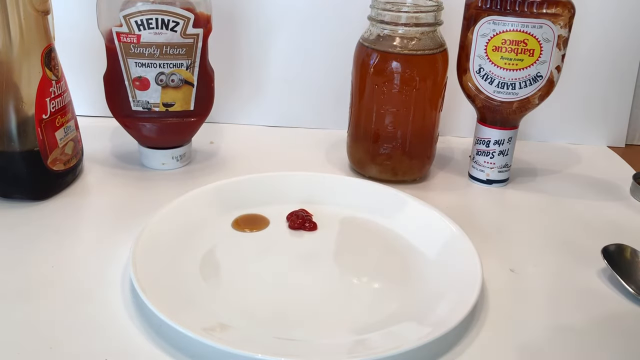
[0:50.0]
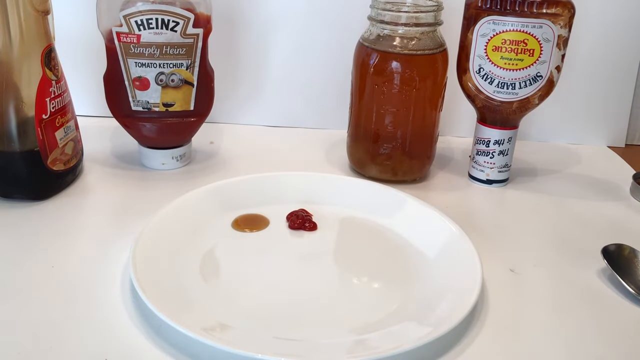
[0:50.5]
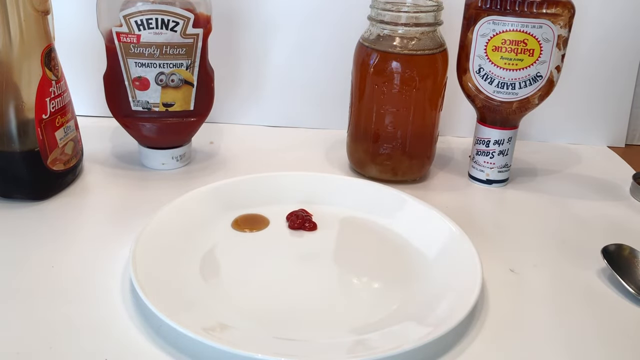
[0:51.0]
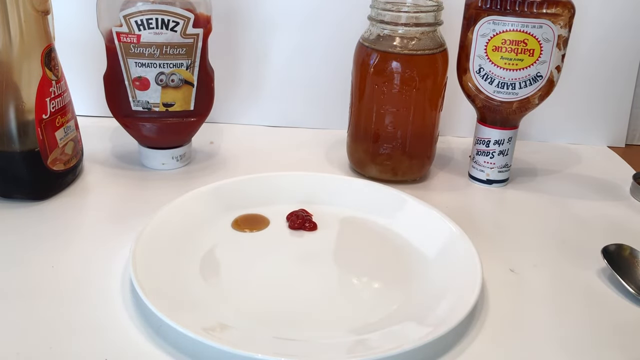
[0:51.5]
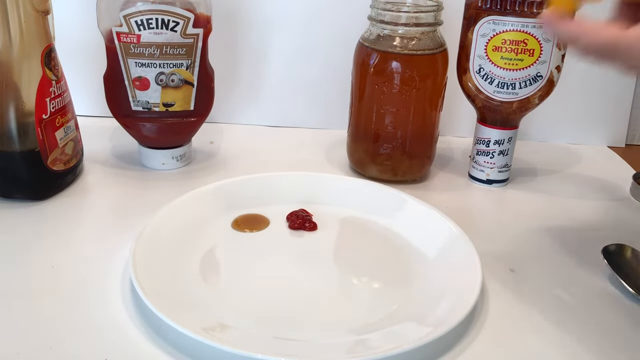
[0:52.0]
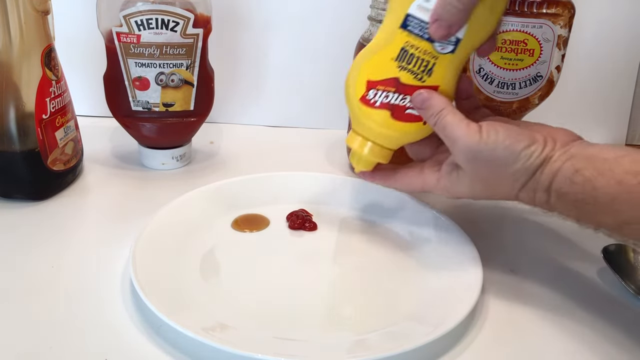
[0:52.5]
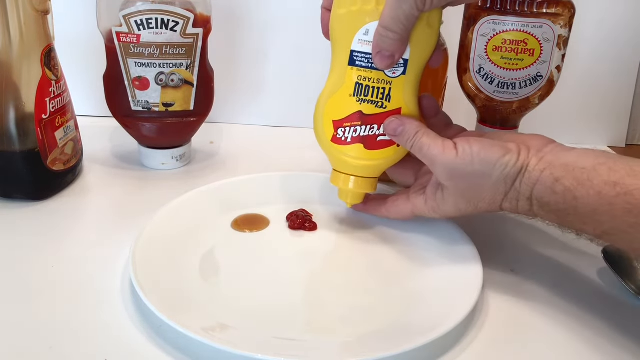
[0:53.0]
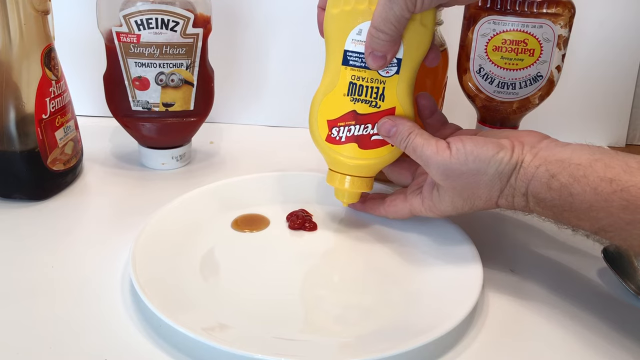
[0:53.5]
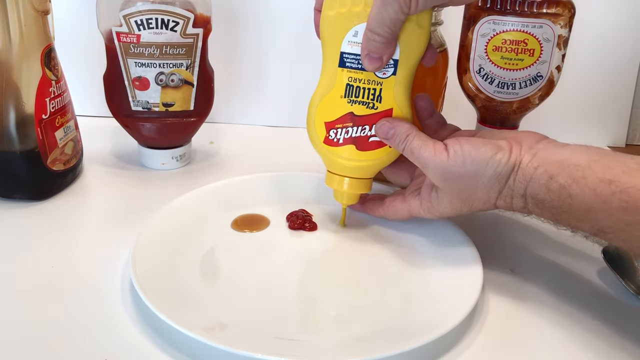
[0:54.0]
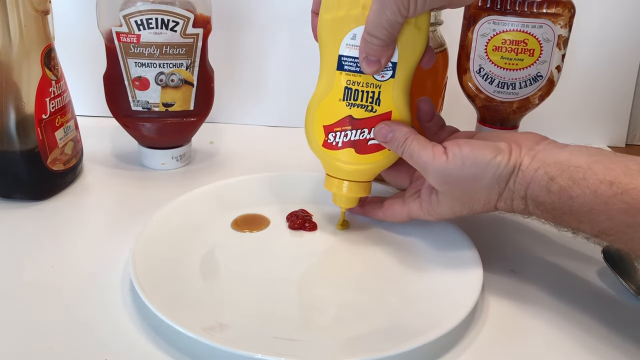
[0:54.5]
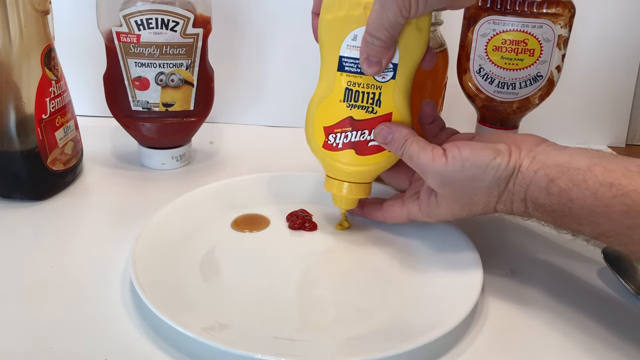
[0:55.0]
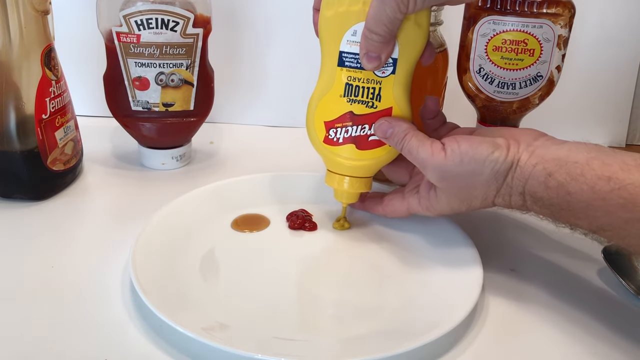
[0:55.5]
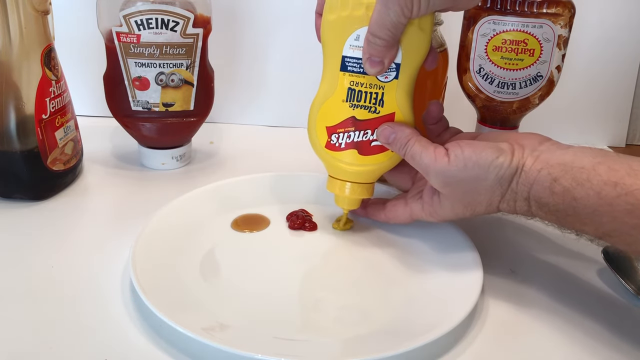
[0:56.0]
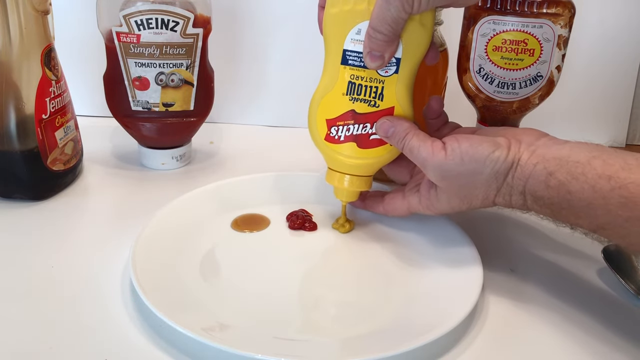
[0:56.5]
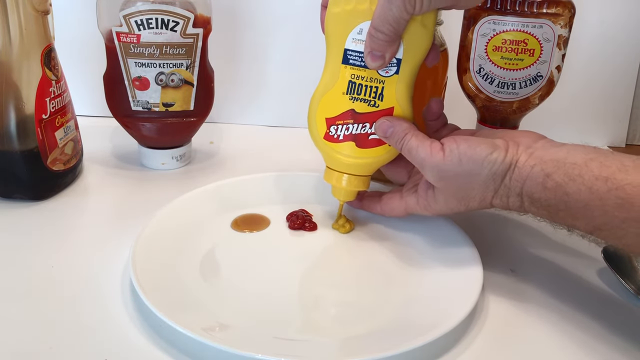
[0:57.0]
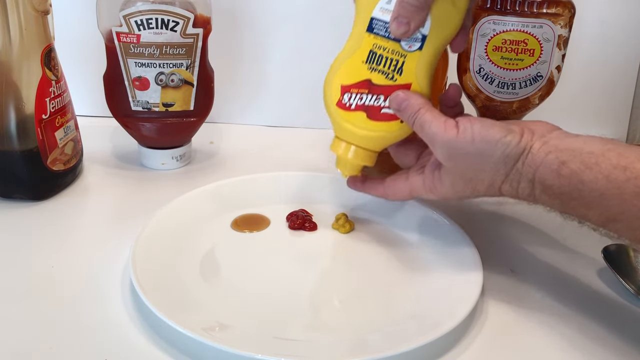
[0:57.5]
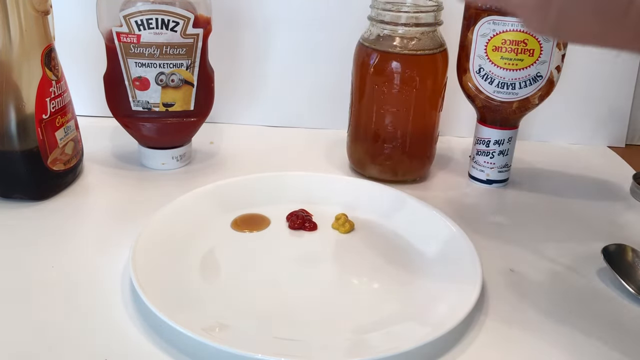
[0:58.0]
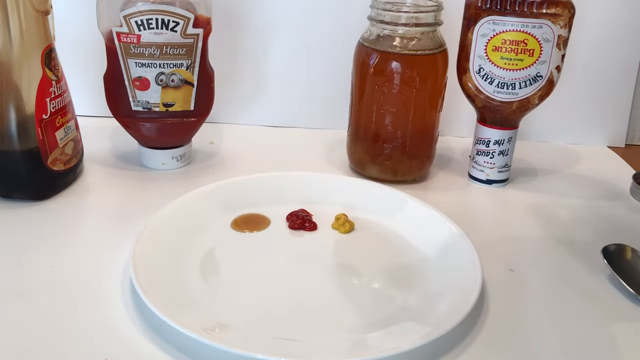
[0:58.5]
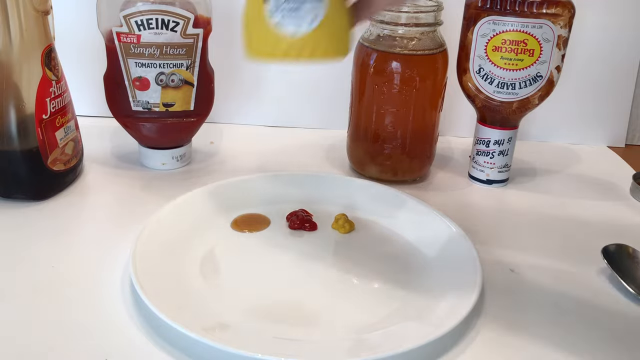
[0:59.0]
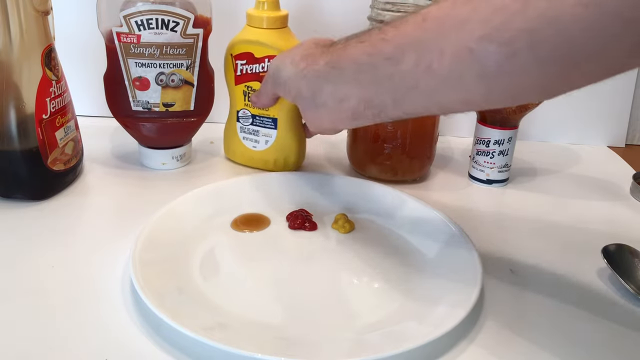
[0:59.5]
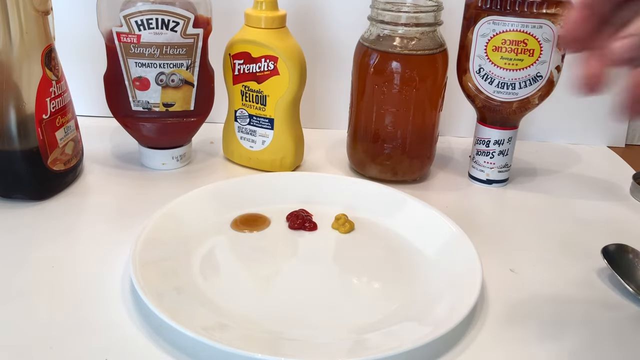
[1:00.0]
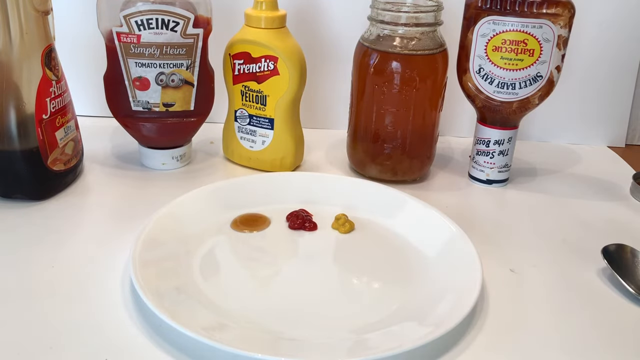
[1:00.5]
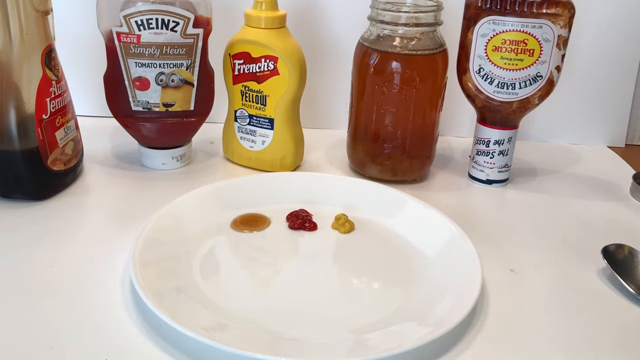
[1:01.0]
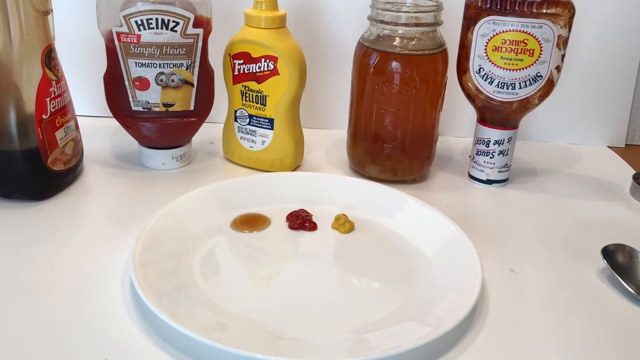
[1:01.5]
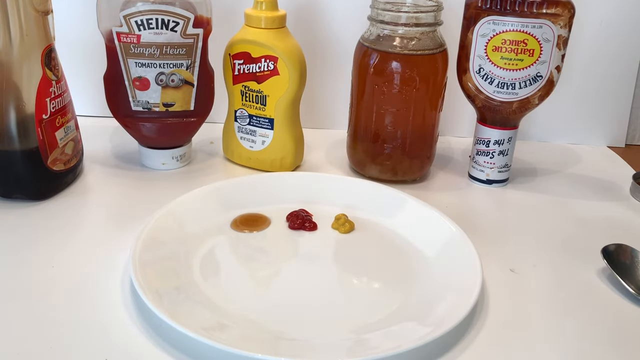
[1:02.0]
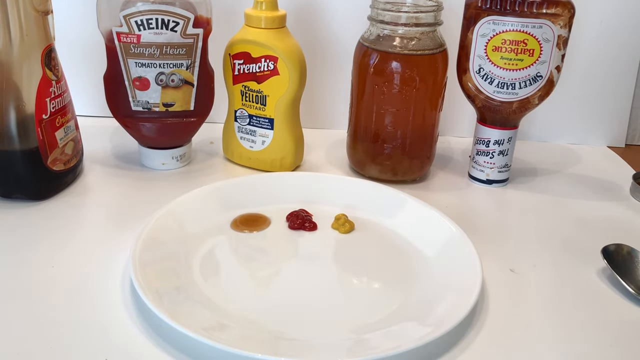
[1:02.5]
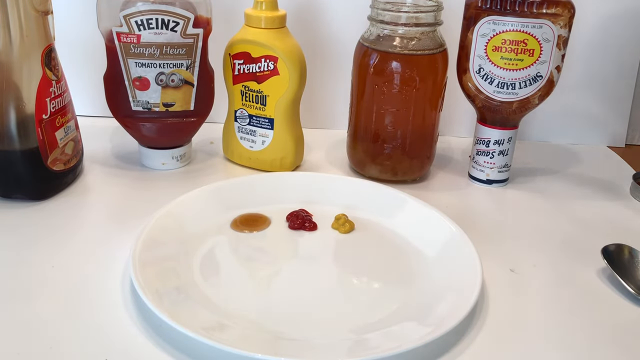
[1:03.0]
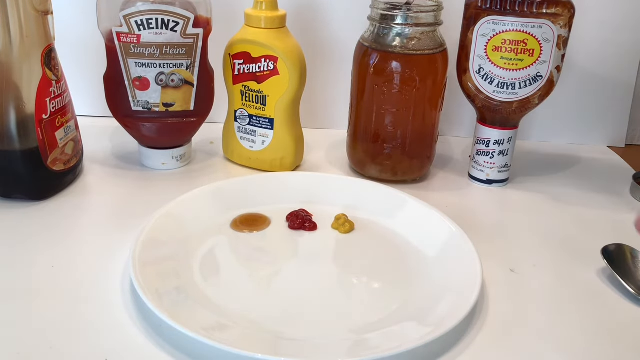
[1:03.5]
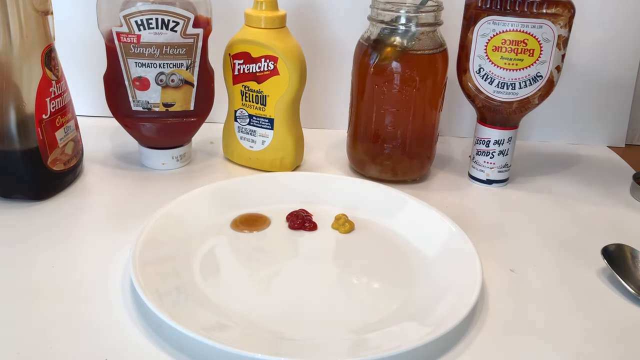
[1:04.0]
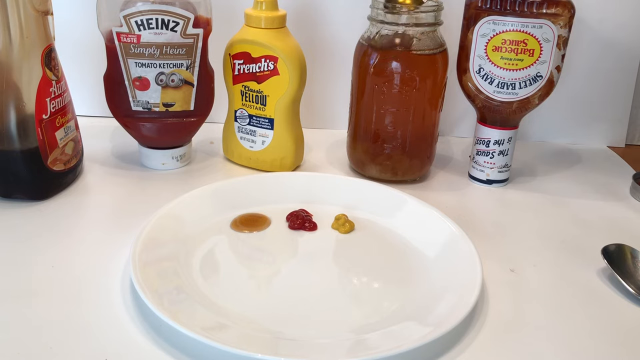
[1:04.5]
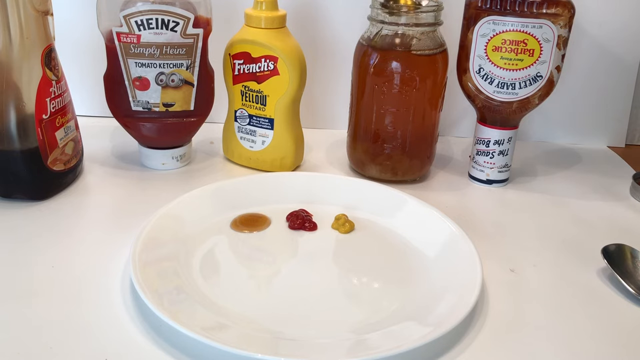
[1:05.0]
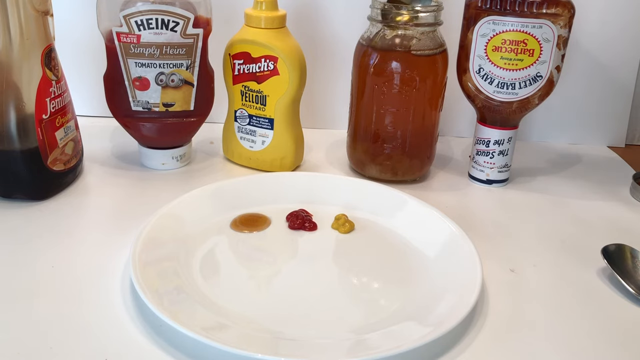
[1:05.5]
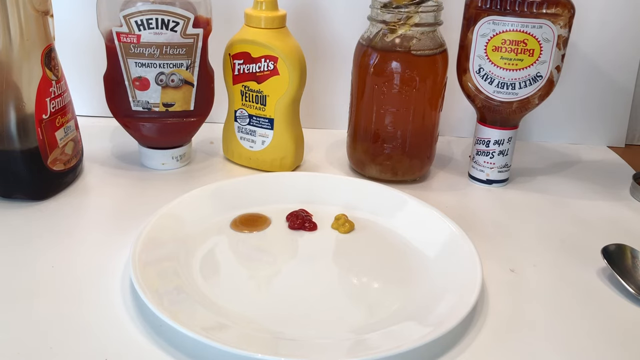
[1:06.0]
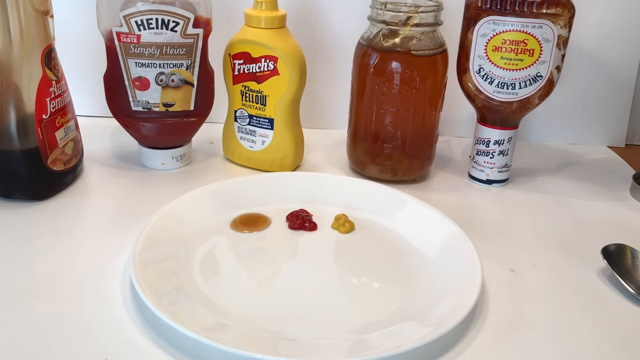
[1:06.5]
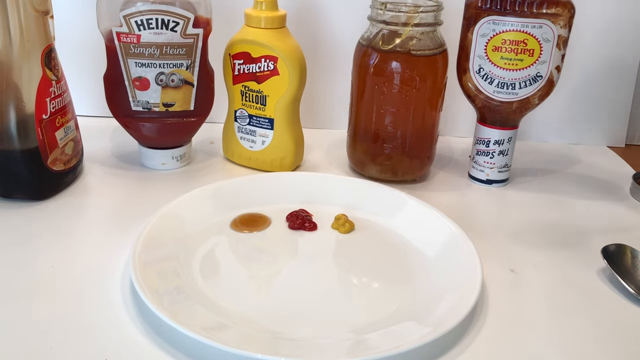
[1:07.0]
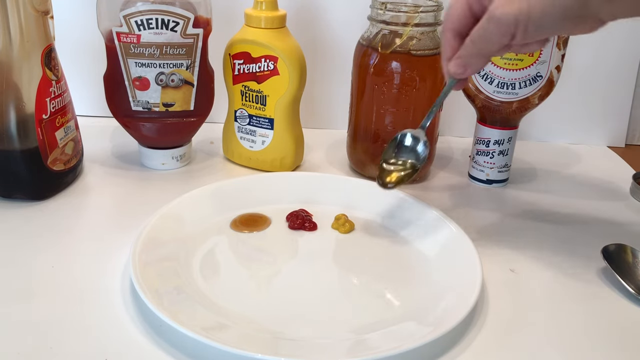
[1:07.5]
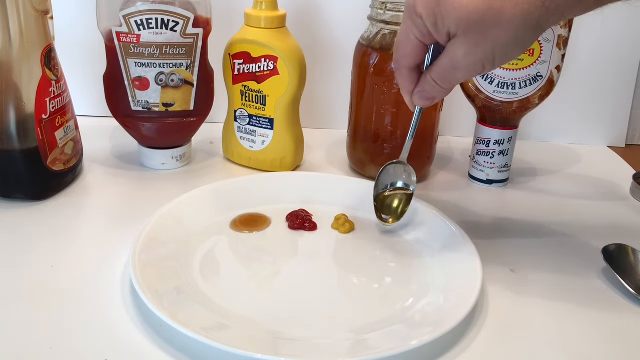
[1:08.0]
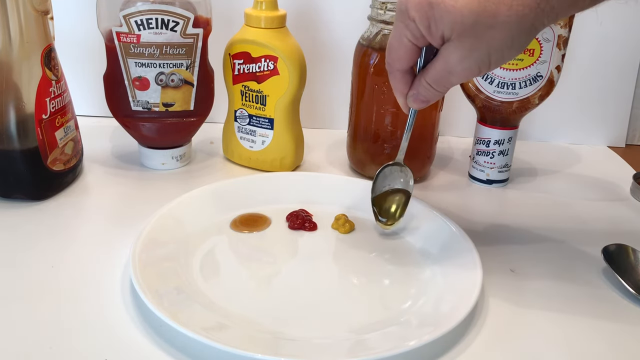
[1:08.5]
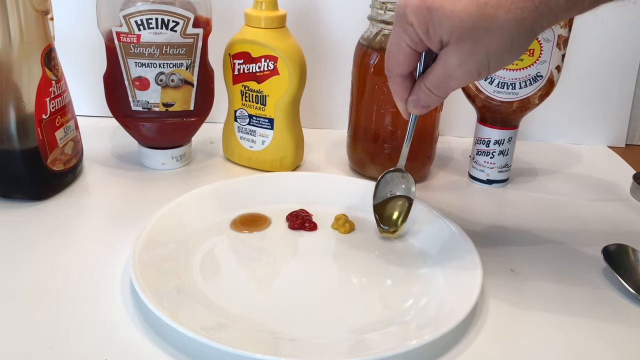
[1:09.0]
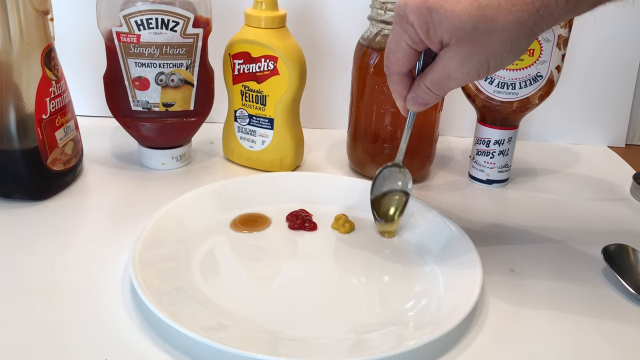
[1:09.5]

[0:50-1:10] The white plate is on a white countertop with a white wall in the background. On the plate is a drop of syrup, with ketchup on the right side of the syrup. The man comes in from the right side holding the mustard, which was out of the camera's view, and squeezes the yellow mustard with both hands, his right hand on the base of the bottle and his left hand at the top, placing it next to the Heinz ketchup. Using a silver spoon that was out of view, he scoops out a small bit of honey and places it next to the mustard.